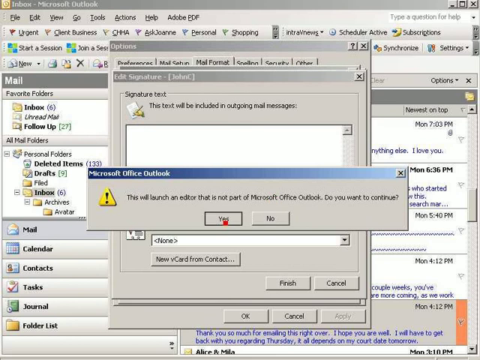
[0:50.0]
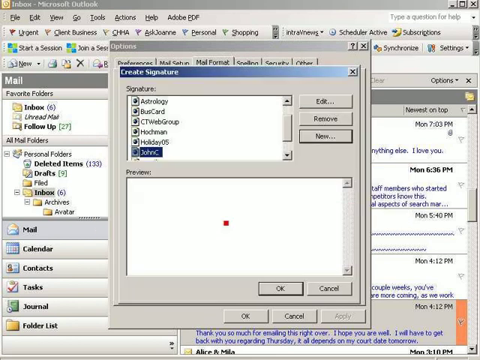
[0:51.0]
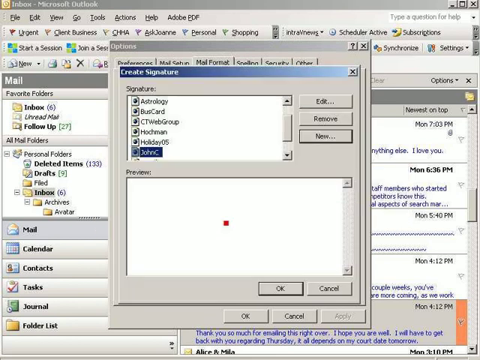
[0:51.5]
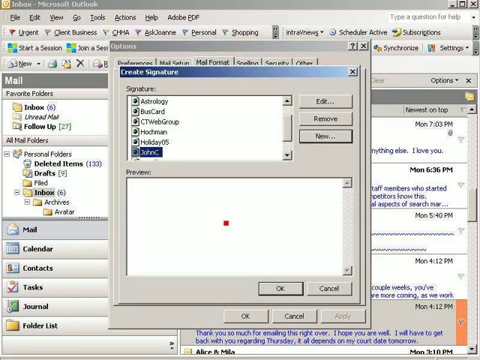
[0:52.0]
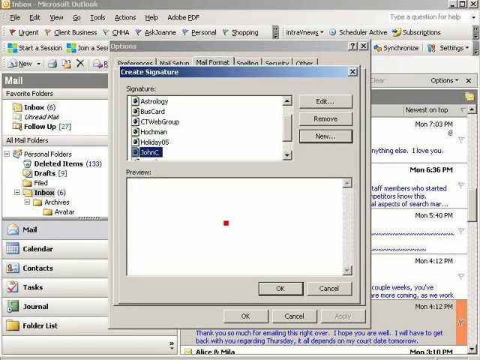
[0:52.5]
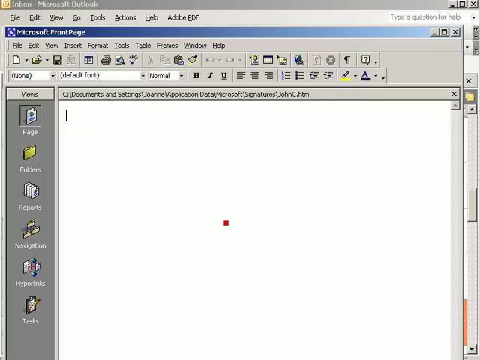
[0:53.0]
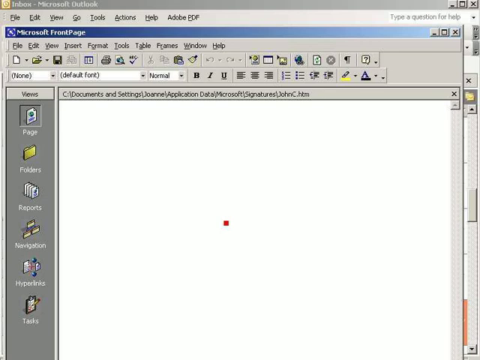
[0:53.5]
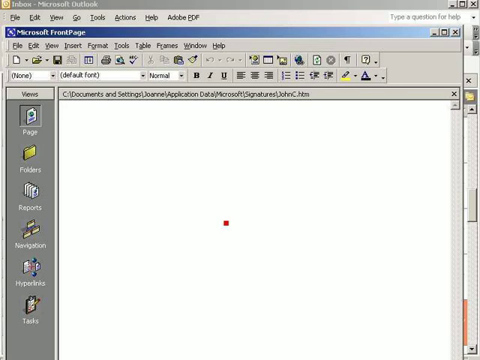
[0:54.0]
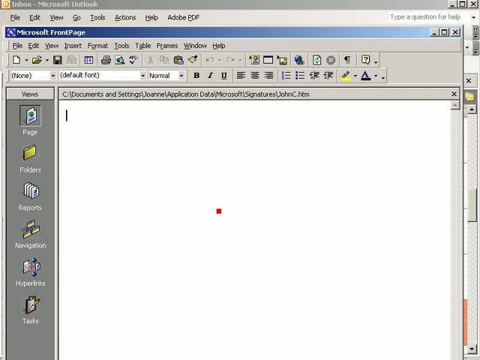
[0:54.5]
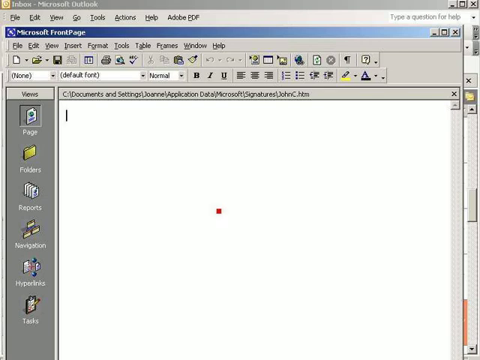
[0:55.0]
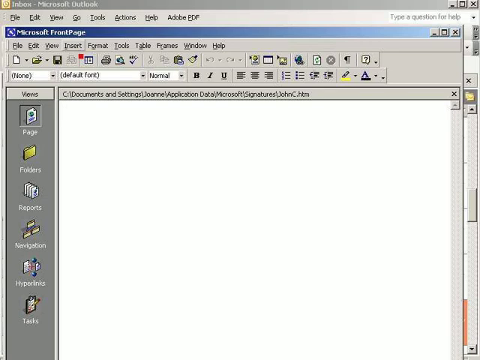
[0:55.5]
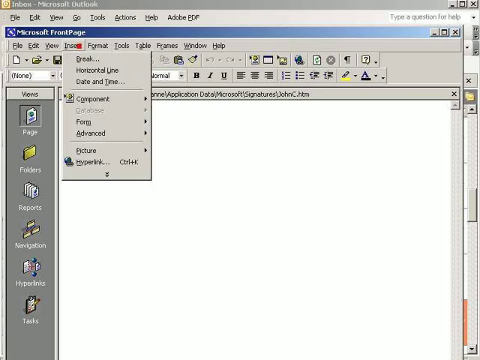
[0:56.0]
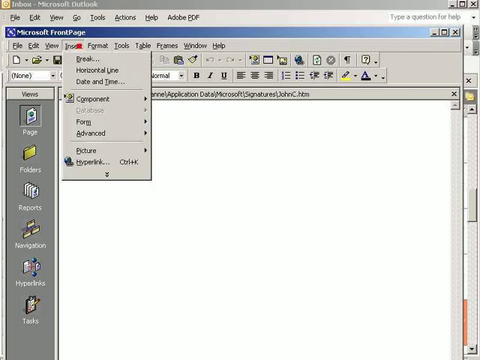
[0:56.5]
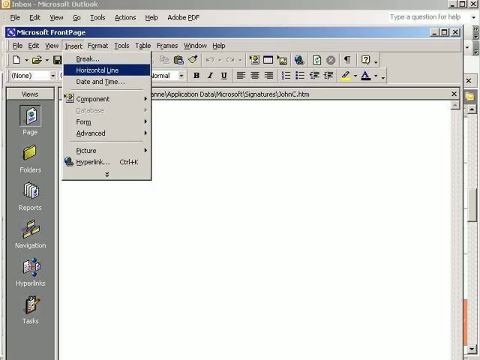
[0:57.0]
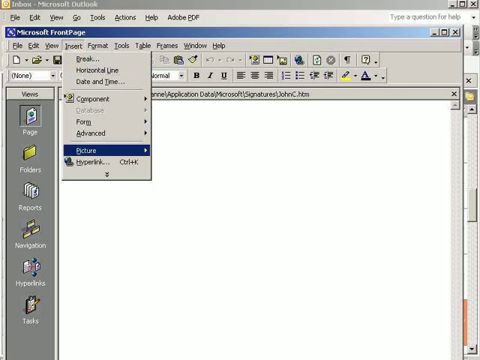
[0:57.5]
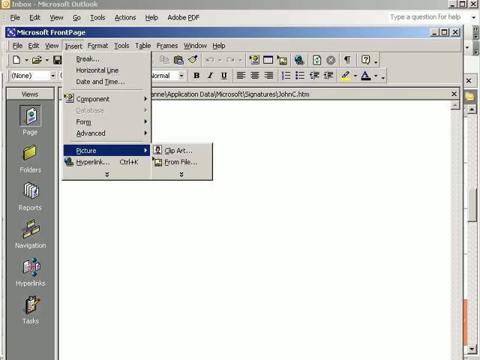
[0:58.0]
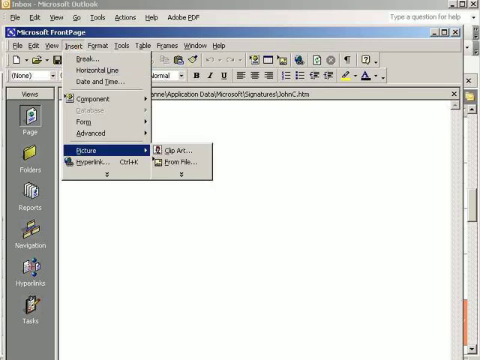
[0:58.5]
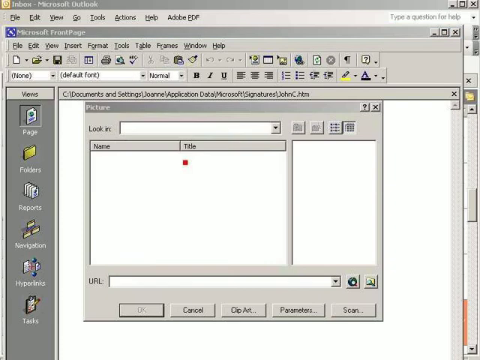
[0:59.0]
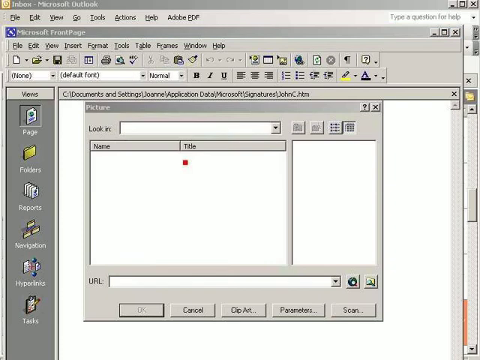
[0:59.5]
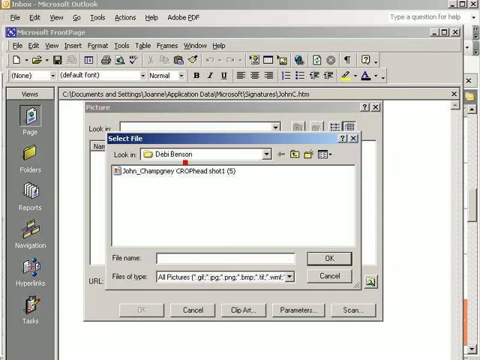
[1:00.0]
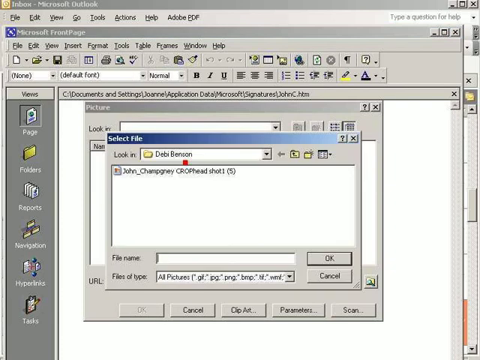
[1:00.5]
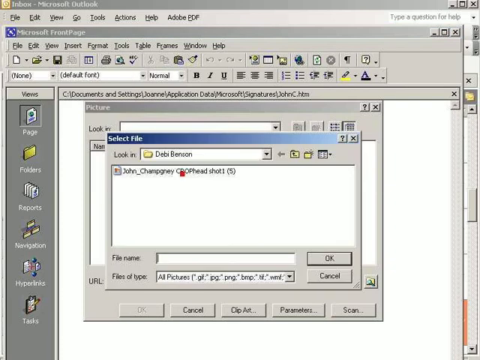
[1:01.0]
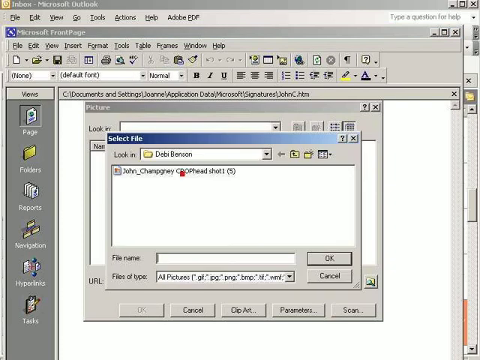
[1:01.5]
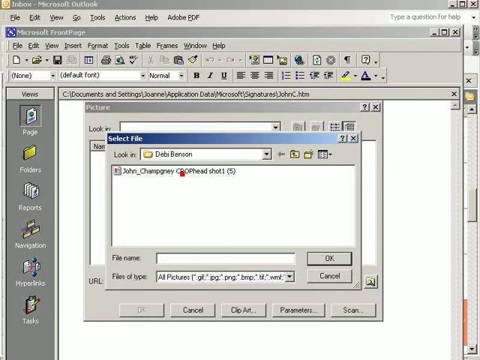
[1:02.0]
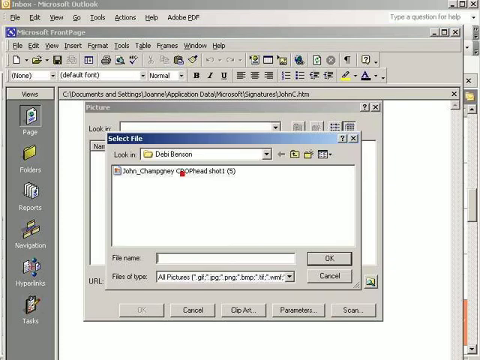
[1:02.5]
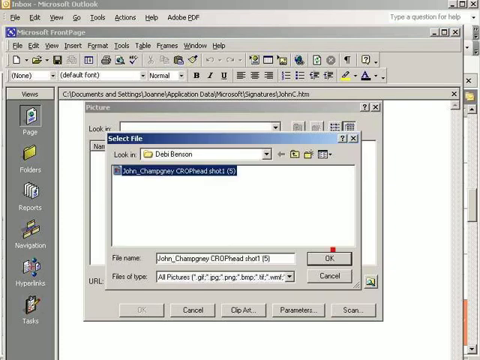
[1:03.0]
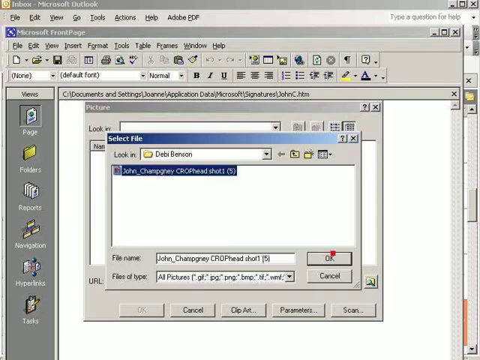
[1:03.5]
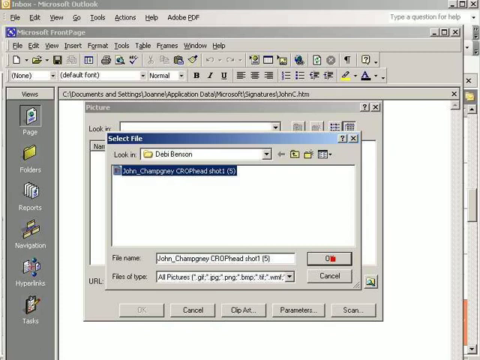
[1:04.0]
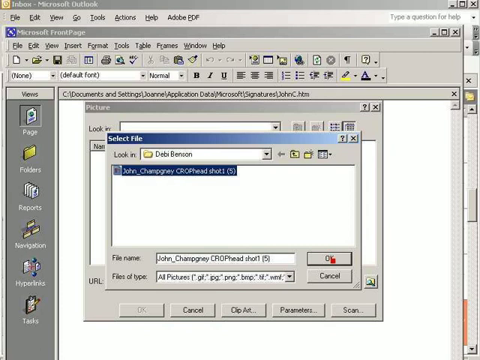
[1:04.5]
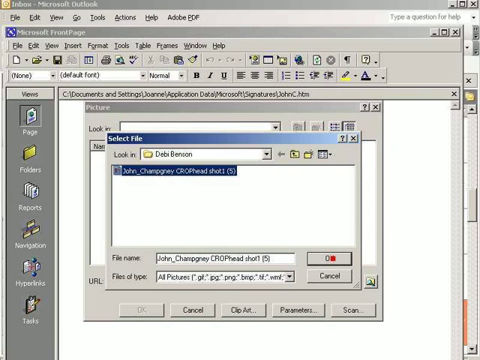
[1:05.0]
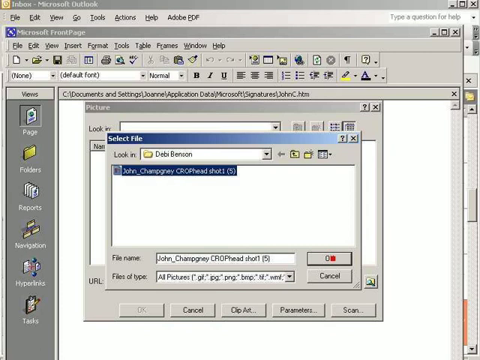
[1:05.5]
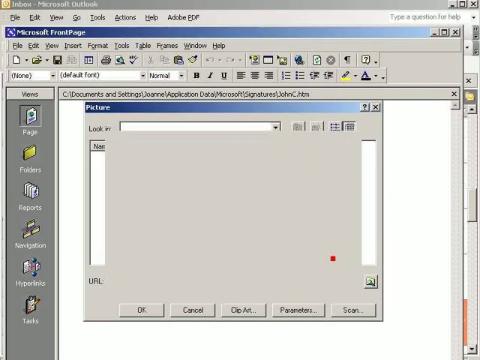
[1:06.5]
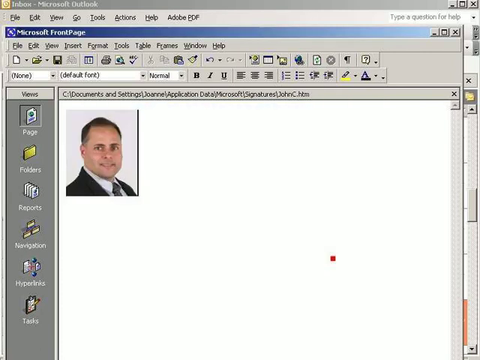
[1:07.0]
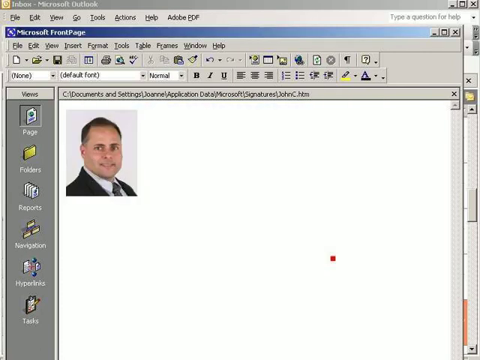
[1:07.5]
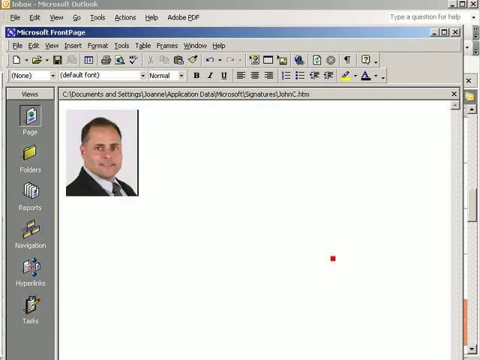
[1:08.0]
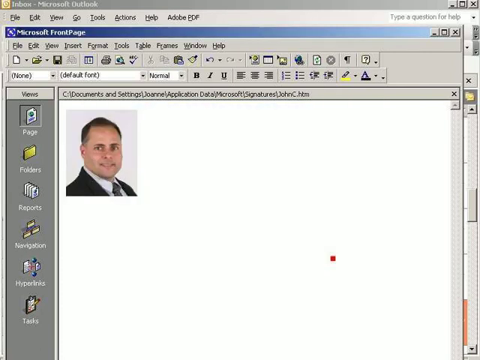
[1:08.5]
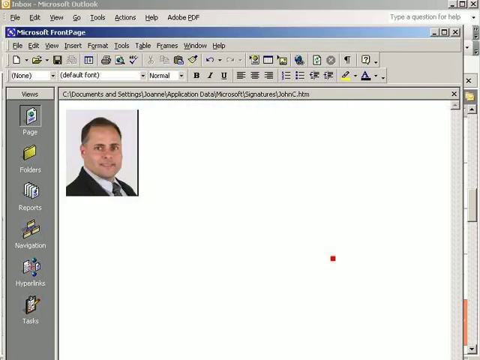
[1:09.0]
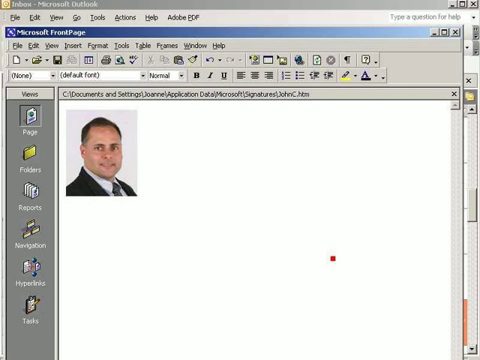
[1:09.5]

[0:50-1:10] A Microsoft Office Outlook pop-up alert reads "This will launch an editor that is not part of Microsoft Office Outlook. Do you want to continue?" The user selects yes, which opens a blank page. They navigate to Insert, then Picture, and select From File, which brings up a pop-up box for selecting a file from the computer; it is looking in a folder called Debbie Benson. A file is selected and OK is clicked, and a headshot, a business photo of a man, appears on the blank page to be added to his signature.